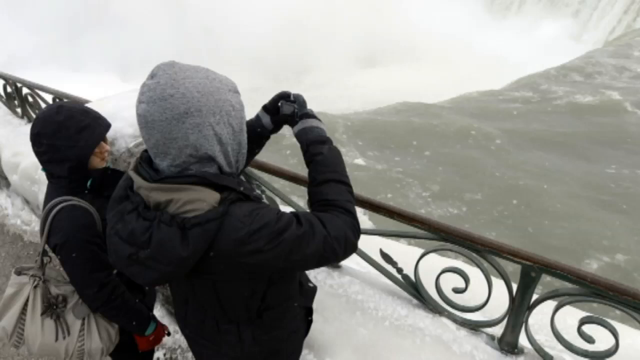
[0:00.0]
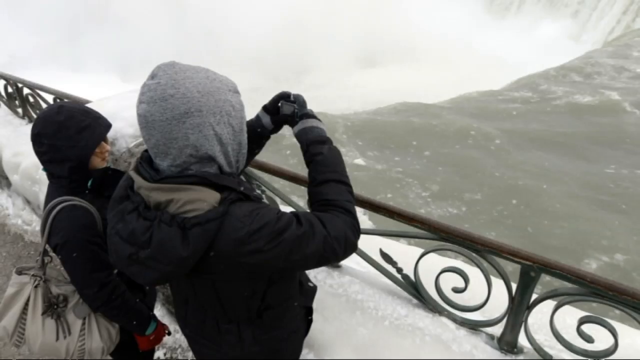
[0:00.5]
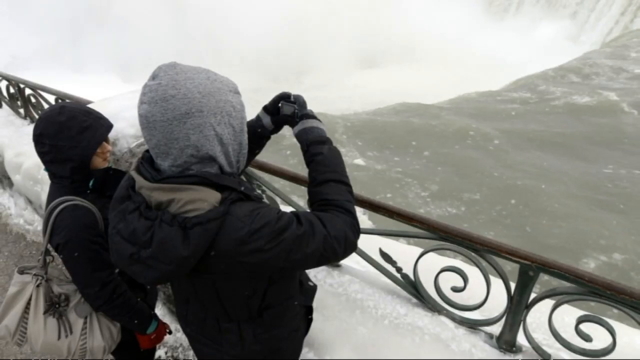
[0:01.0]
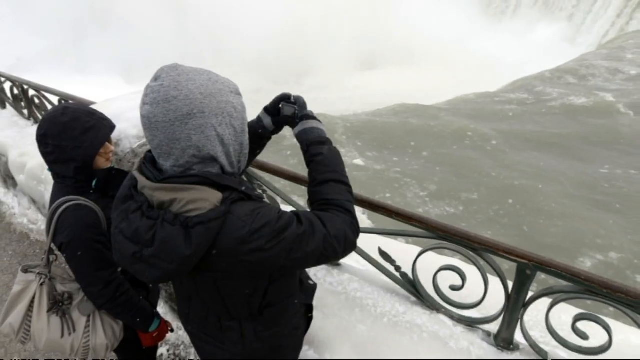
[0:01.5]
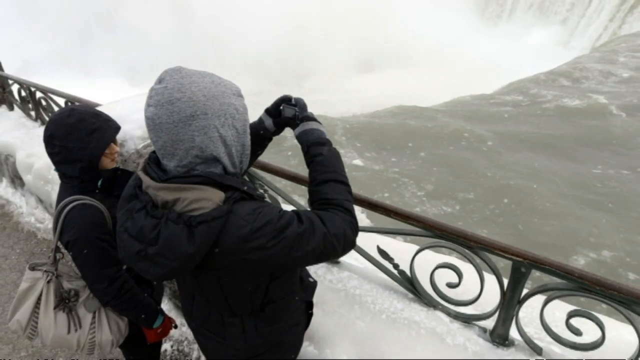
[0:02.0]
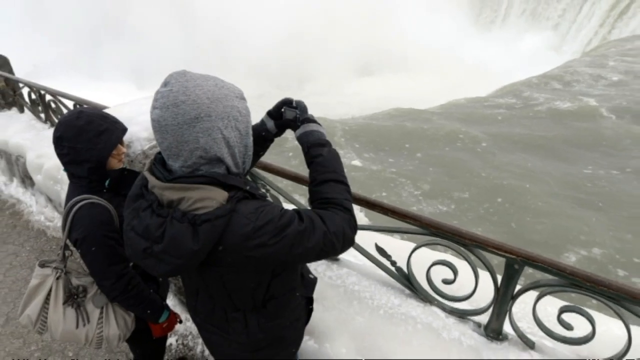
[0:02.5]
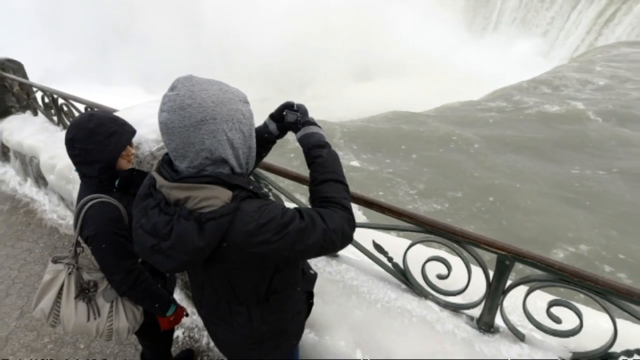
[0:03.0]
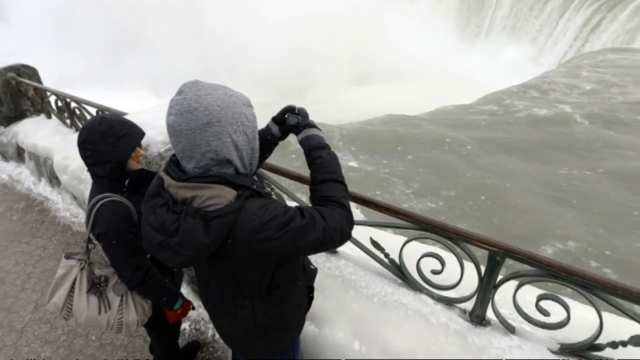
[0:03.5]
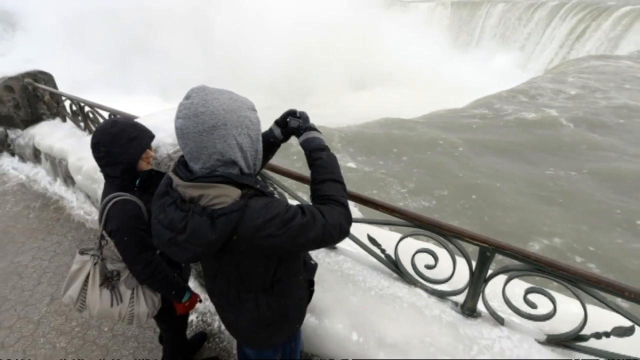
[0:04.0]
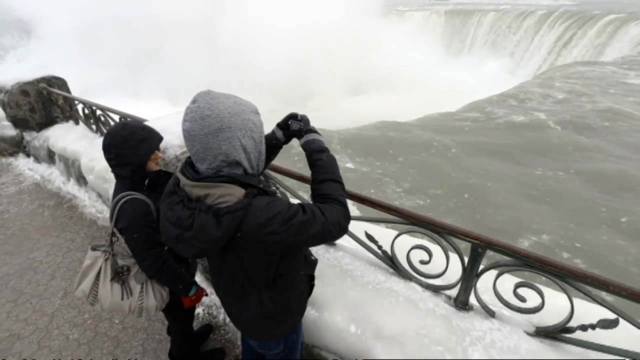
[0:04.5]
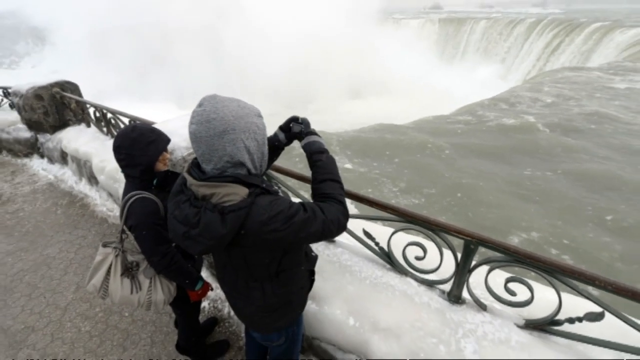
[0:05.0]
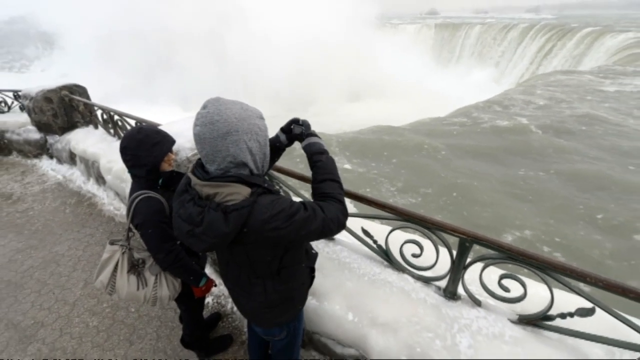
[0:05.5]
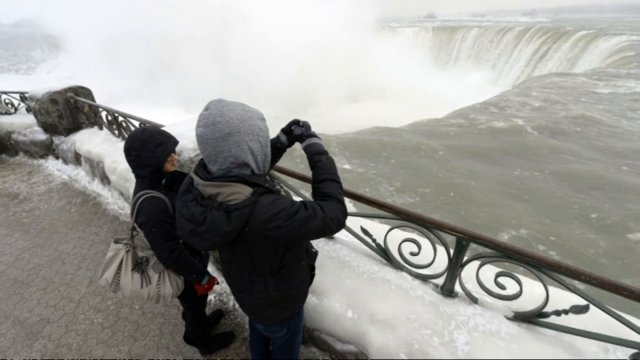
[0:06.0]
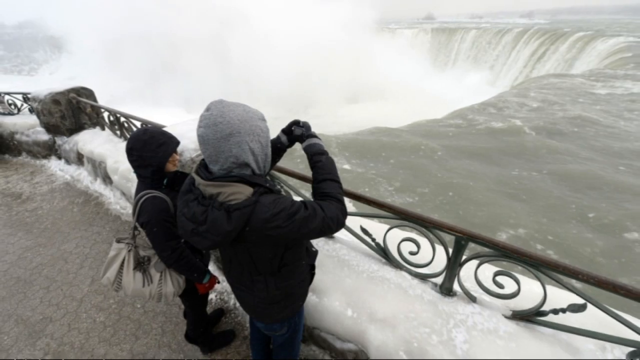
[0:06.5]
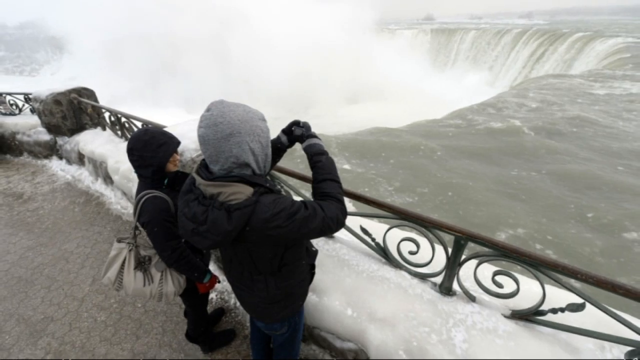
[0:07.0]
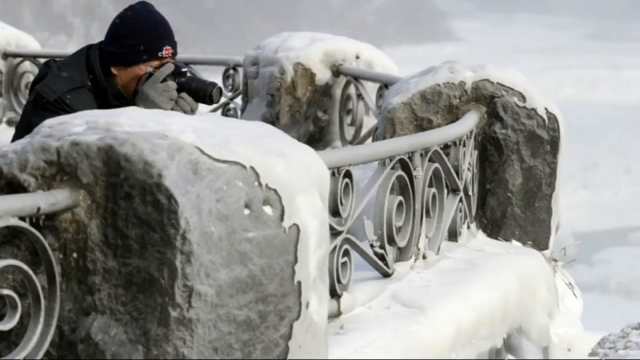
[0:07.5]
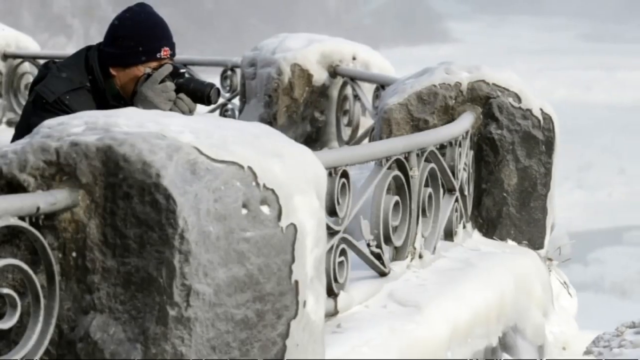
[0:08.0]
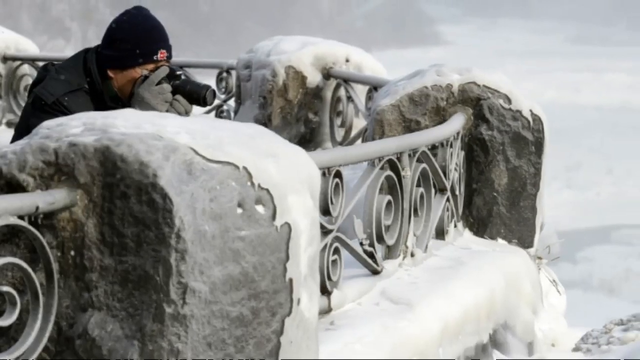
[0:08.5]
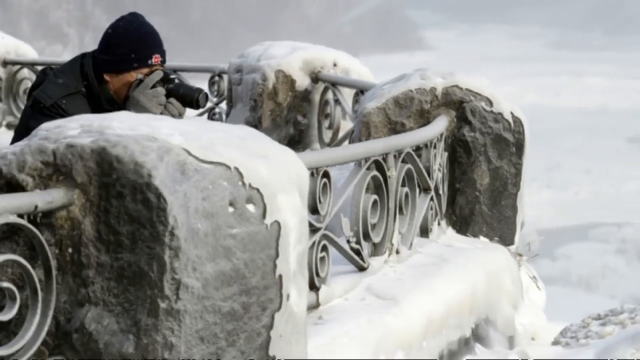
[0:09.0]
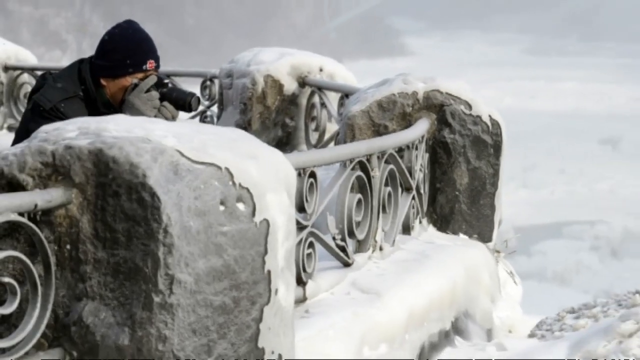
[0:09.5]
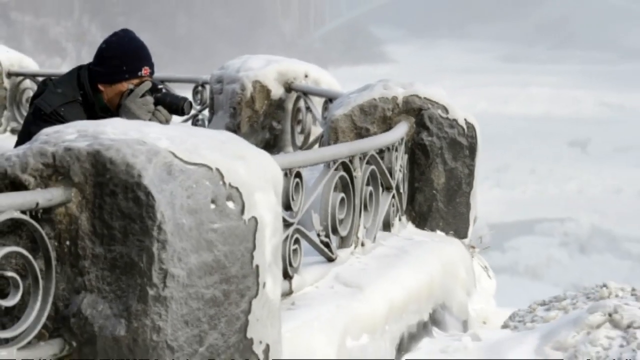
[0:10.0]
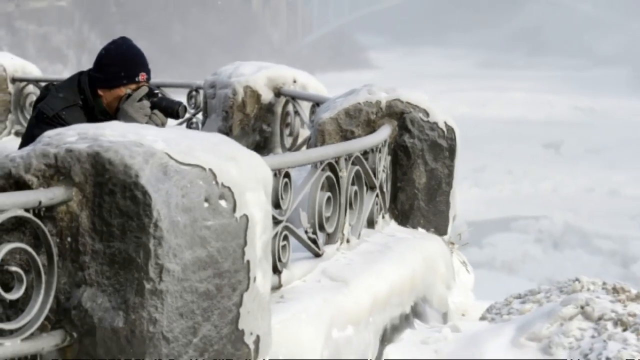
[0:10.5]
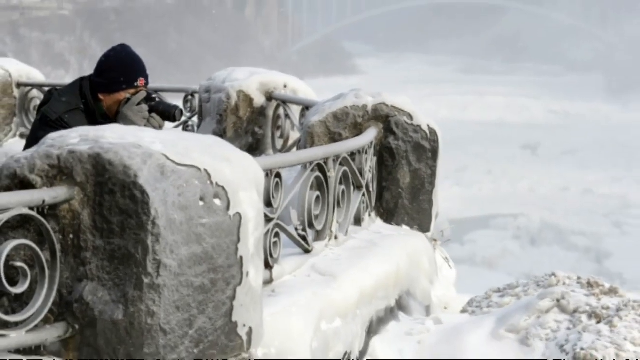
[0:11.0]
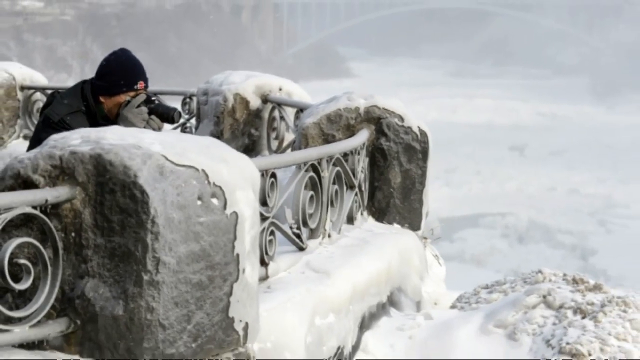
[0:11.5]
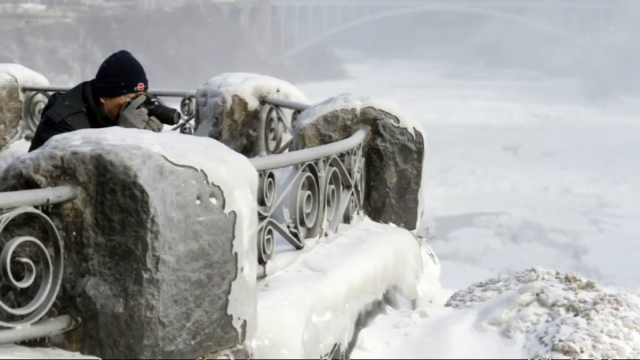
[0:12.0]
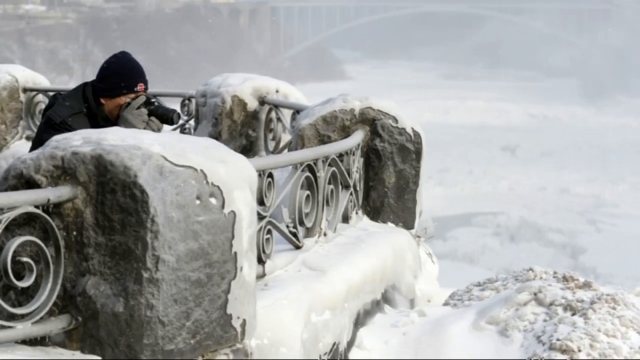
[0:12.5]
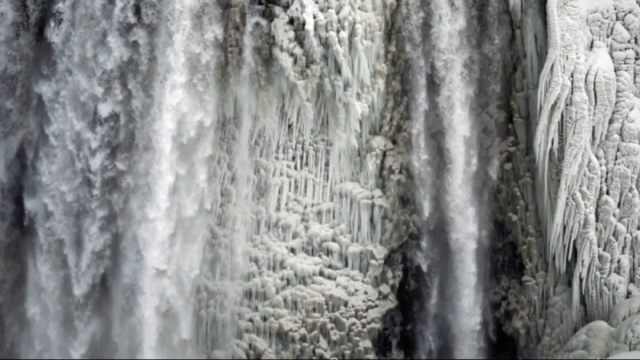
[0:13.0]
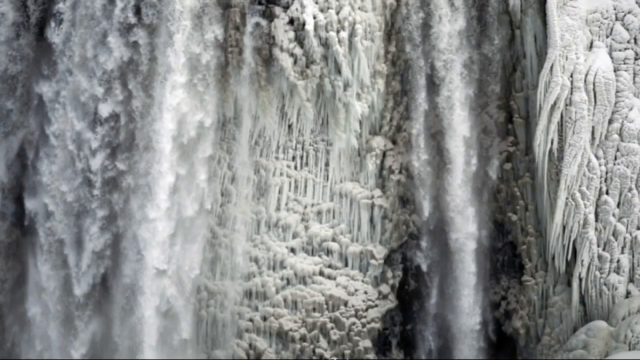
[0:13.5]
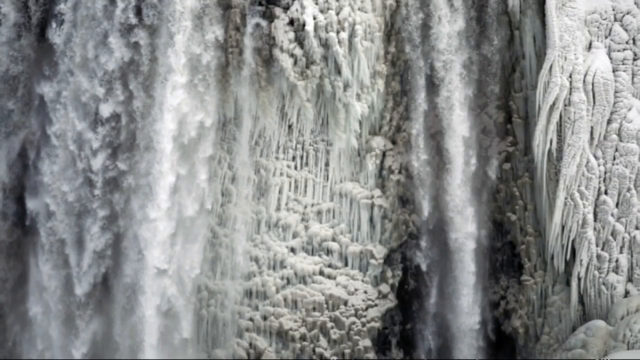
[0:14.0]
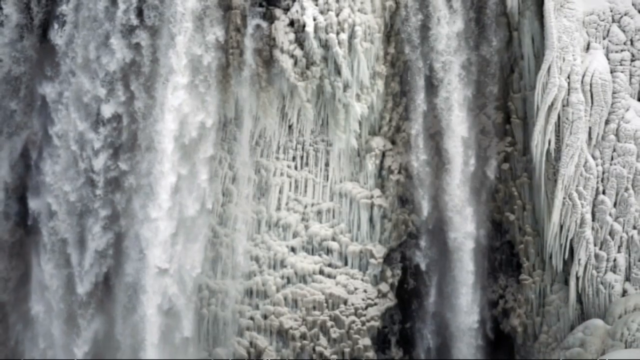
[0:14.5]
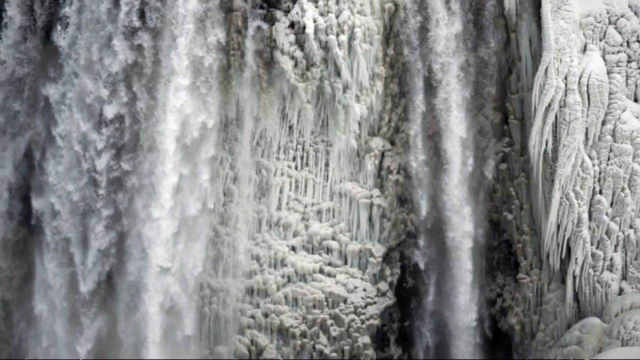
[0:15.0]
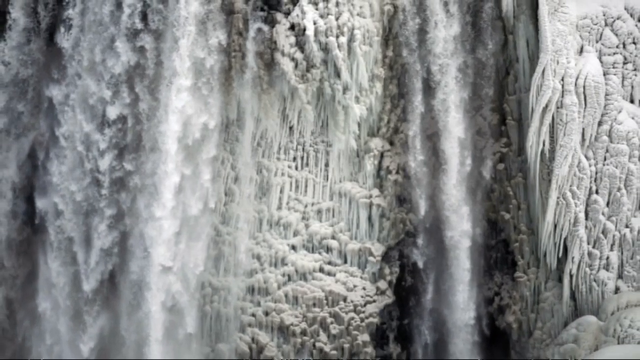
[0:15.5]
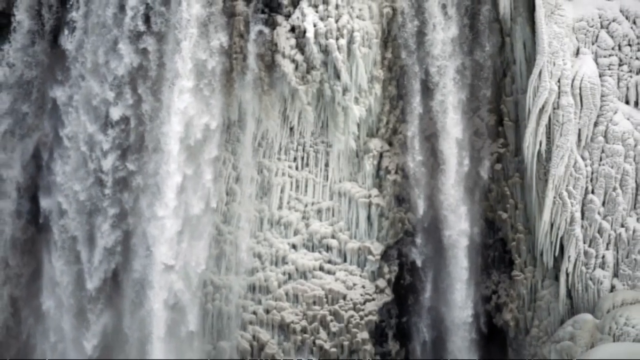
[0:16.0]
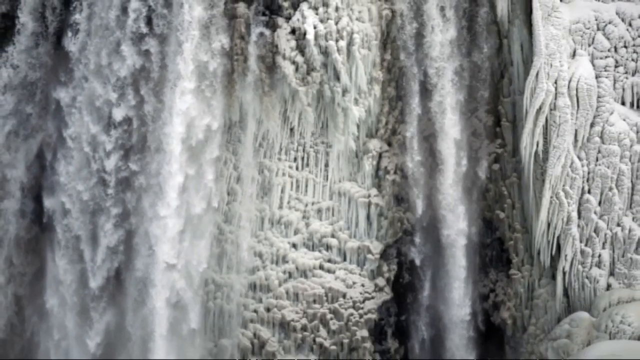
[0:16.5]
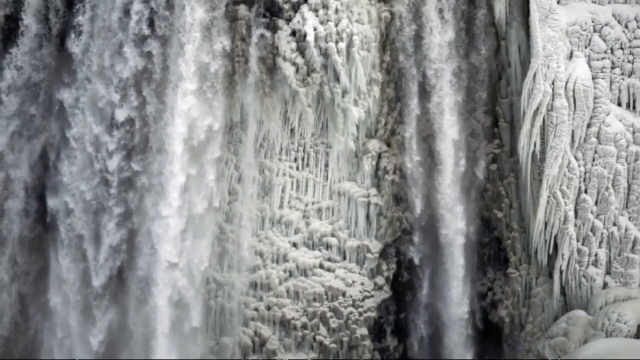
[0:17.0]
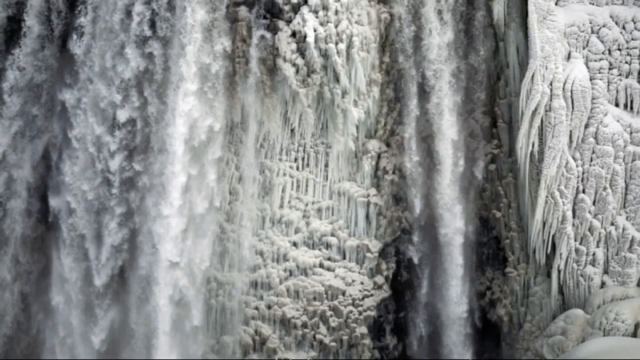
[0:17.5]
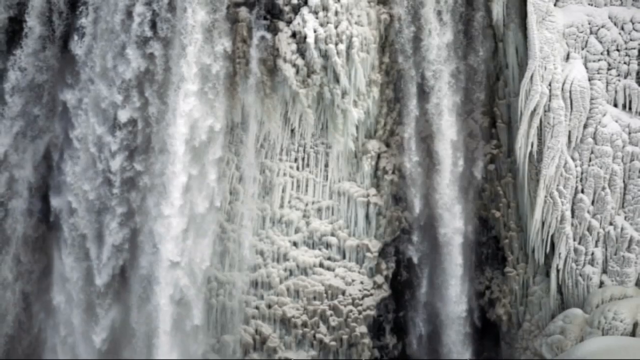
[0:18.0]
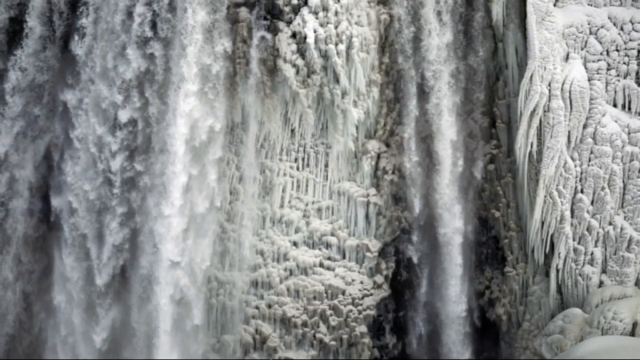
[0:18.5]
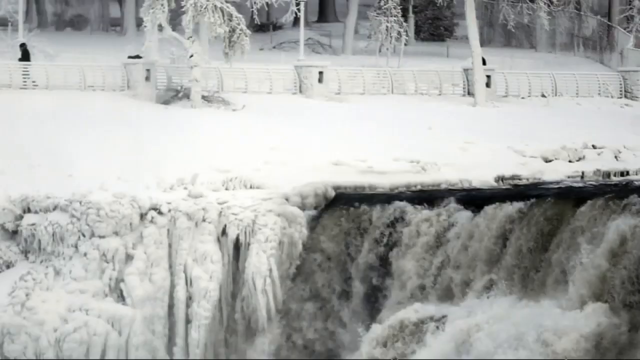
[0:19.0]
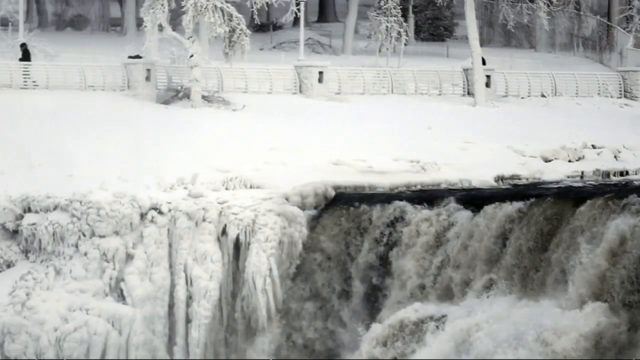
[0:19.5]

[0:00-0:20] Two people stand over a frozen waterfall taking a picture; it appears to be mainly a man taking the picture, with shots of him and of the waterfall. A frozen, wintry landscape is shown, completely frozen out, and the waterfall appears to be frozen in place. Some of it might be running, while other portions are frozen mid-waterfall, with an icy structure behind. A series of further ice and waterfall landscapes follows, seemingly shot at scale. There is a man apparently in a green jacket, then another shot of the jagged waterfall frozen in place in segments of ice. The video cuts back to the two people, a man and a woman in black jackets, looking over the waterfall, then to another man in black with a black hat holding a camera and shooting the waterfall. Next comes a shot of the waterfall itself, presumably from that camera, appearing frozen mid-waterfall, then a shot from a bit higher up showing the landscape behind it with some people walking there, and then the bottom of the frozen waterfall. The sequence of broken, jagged frozen landscapes around the waterfall appears again, followed by a bridge crossing a frozen landscape at the bottom.